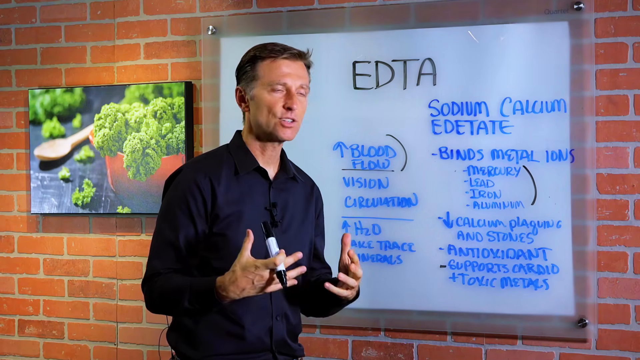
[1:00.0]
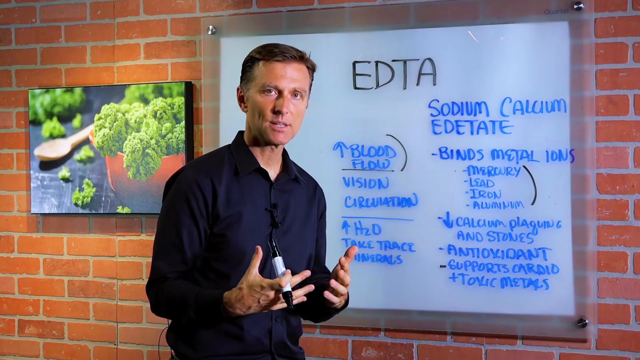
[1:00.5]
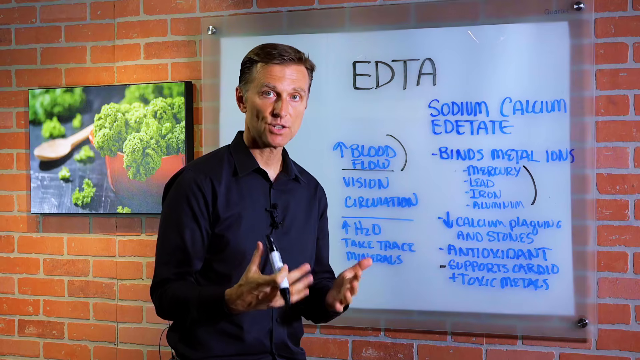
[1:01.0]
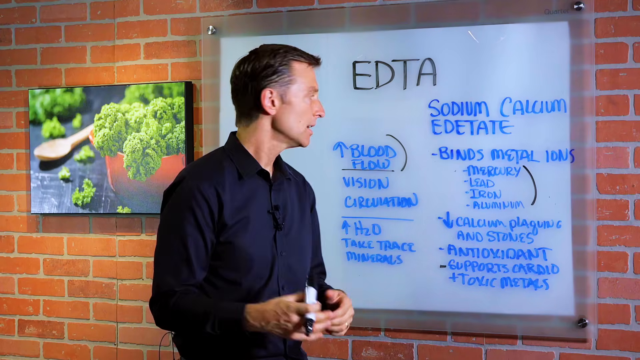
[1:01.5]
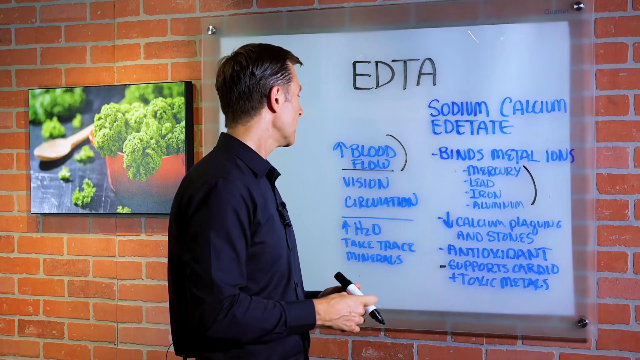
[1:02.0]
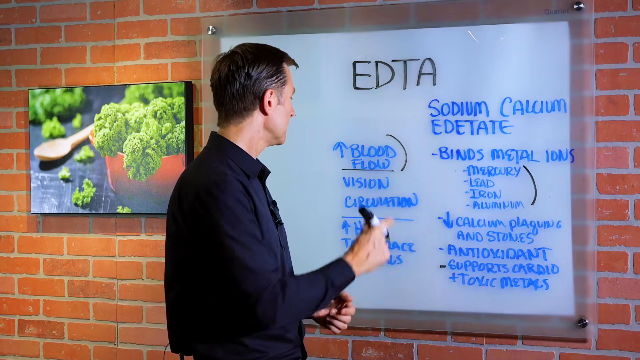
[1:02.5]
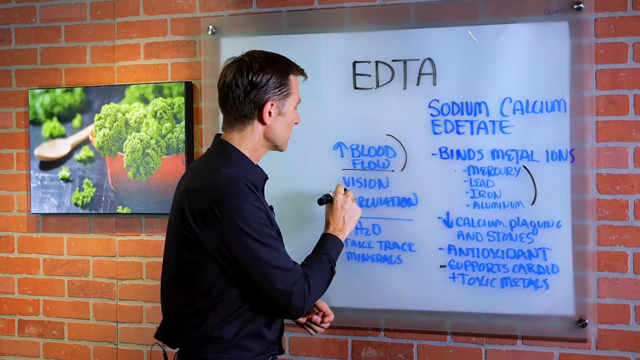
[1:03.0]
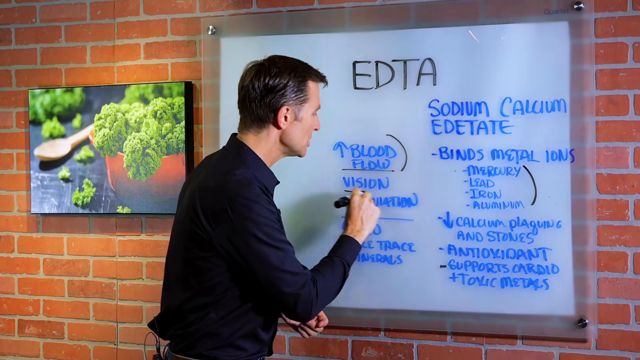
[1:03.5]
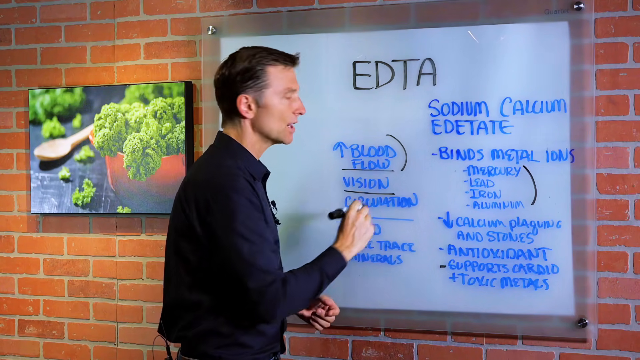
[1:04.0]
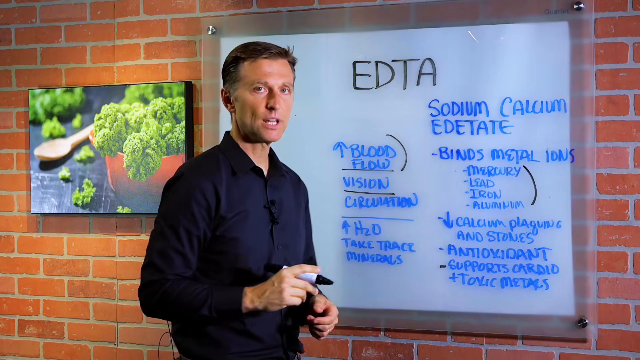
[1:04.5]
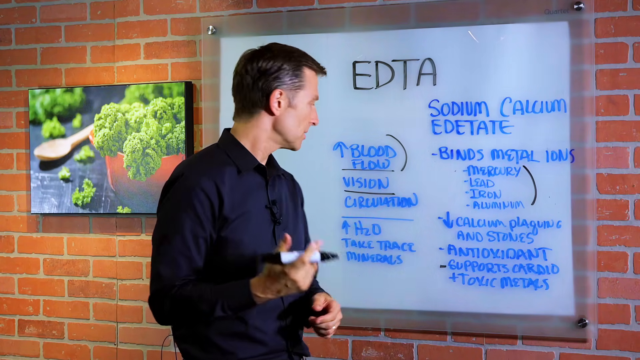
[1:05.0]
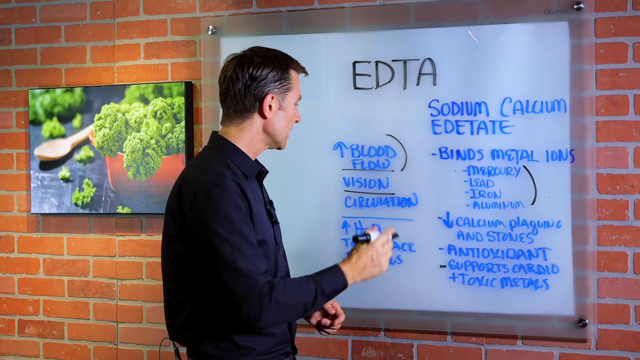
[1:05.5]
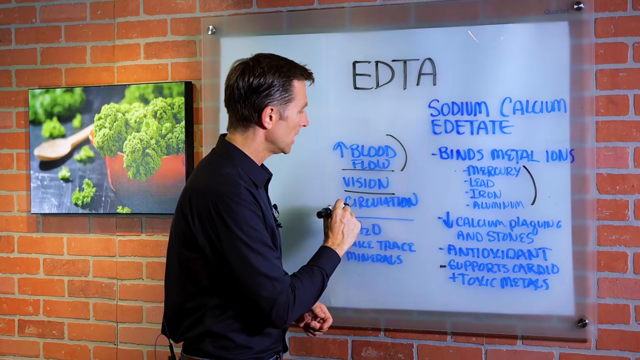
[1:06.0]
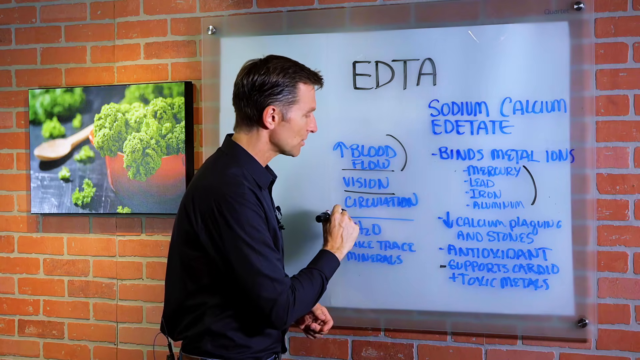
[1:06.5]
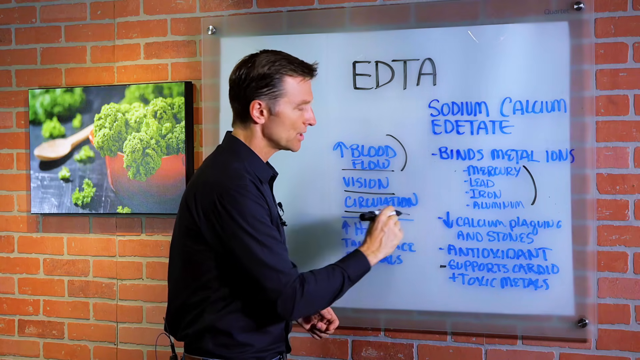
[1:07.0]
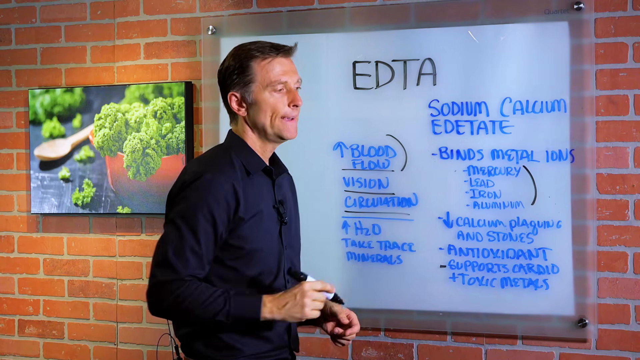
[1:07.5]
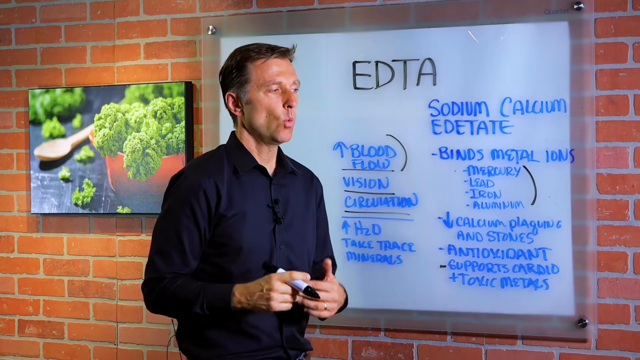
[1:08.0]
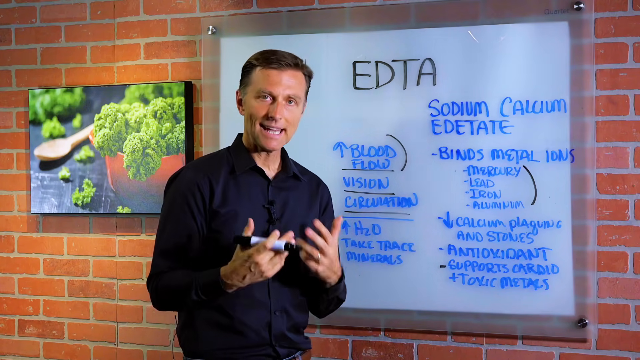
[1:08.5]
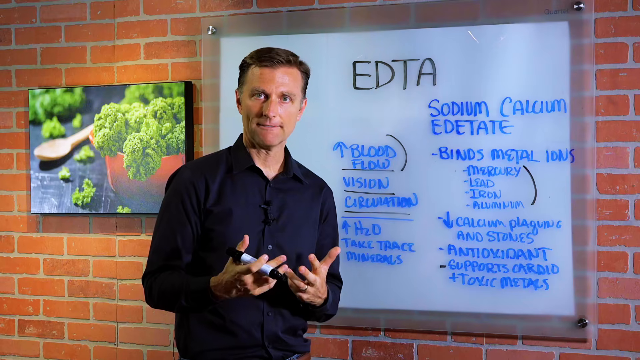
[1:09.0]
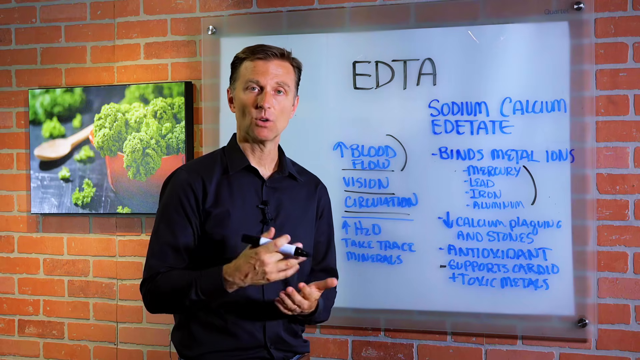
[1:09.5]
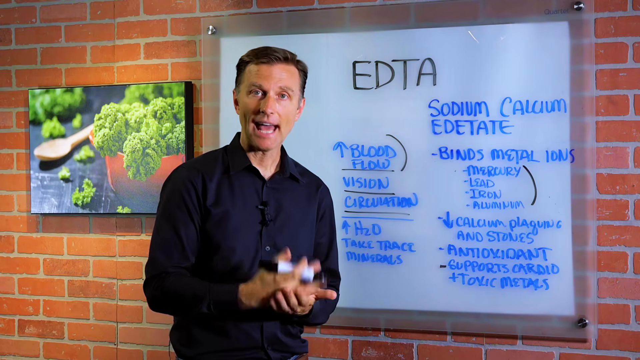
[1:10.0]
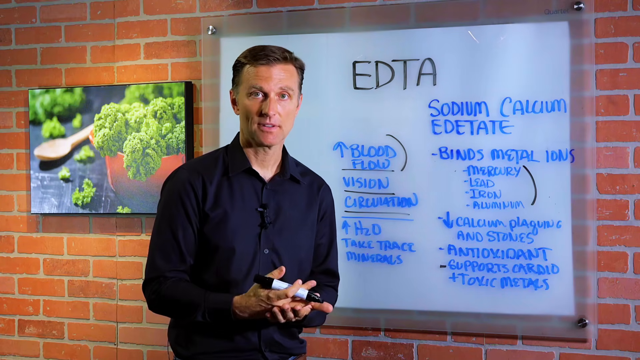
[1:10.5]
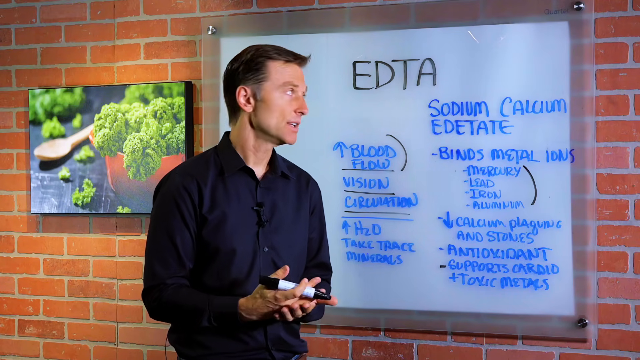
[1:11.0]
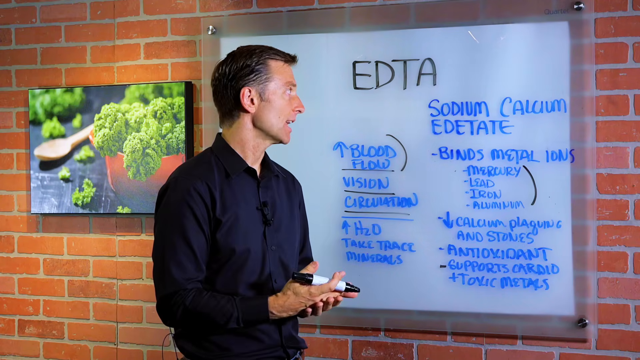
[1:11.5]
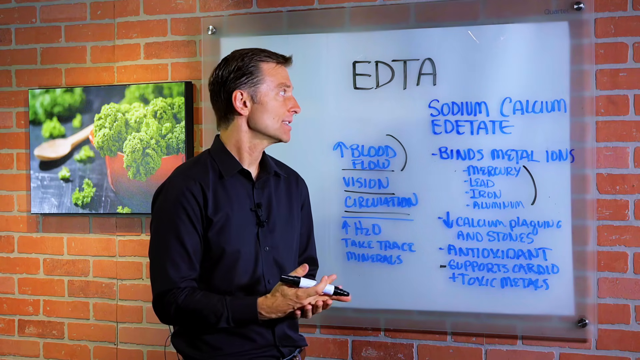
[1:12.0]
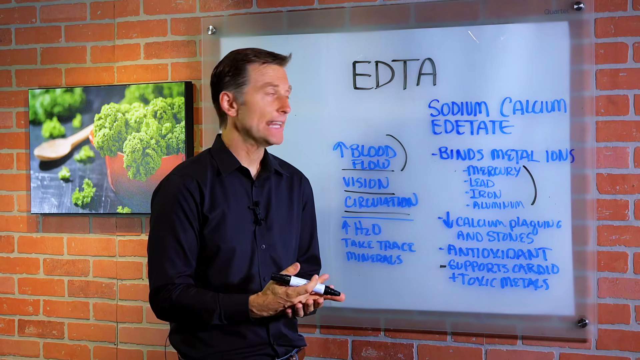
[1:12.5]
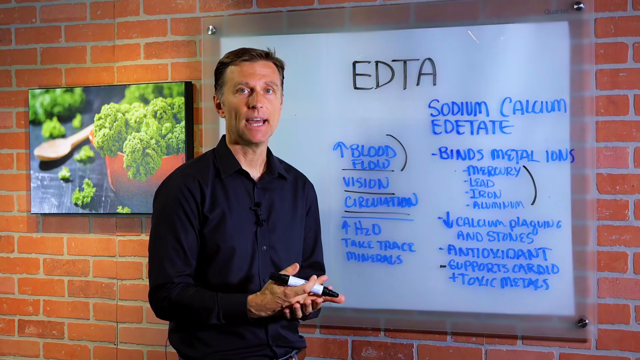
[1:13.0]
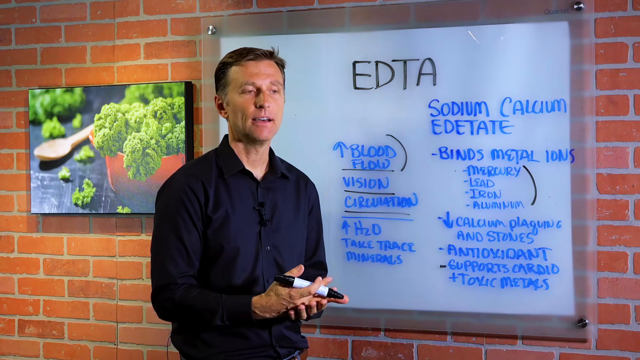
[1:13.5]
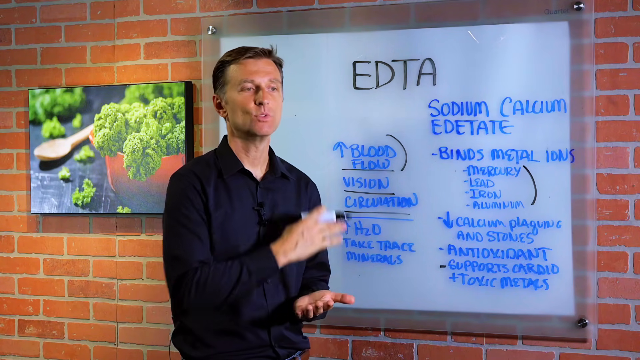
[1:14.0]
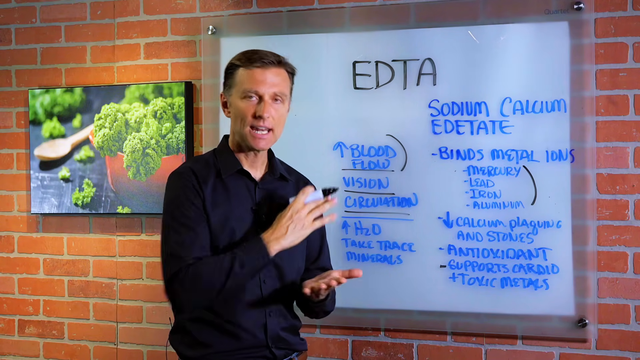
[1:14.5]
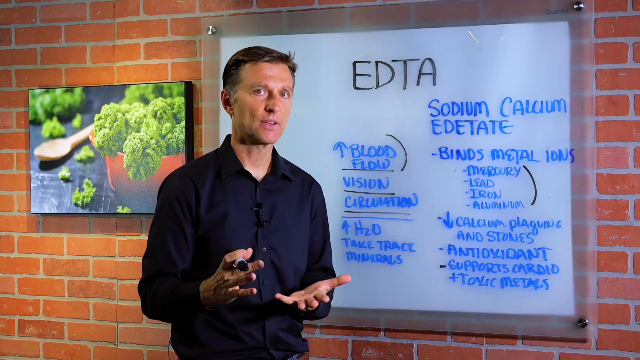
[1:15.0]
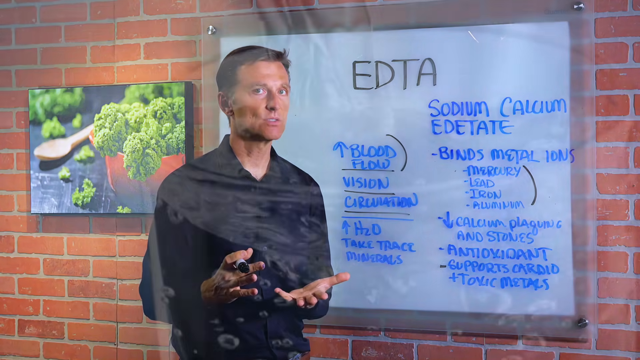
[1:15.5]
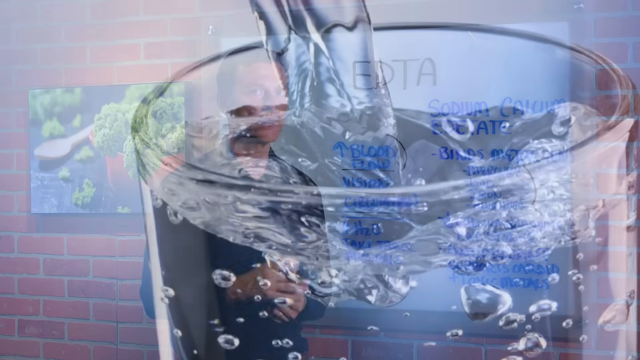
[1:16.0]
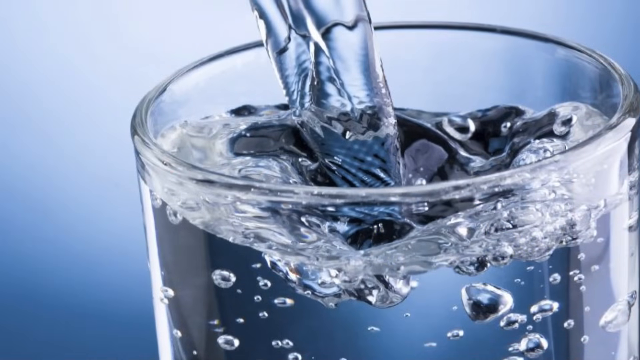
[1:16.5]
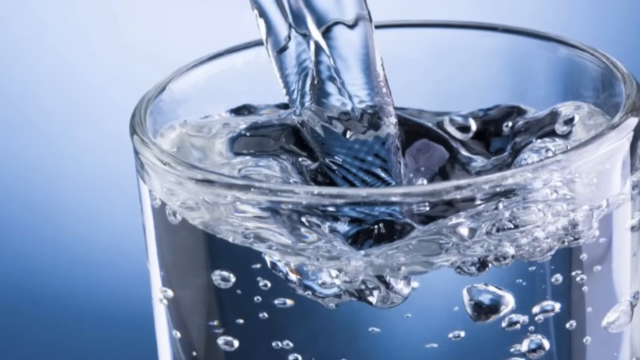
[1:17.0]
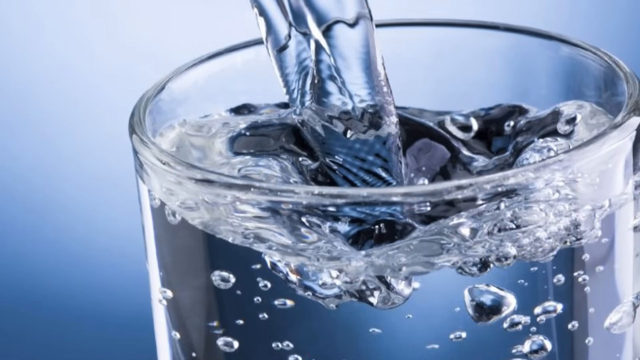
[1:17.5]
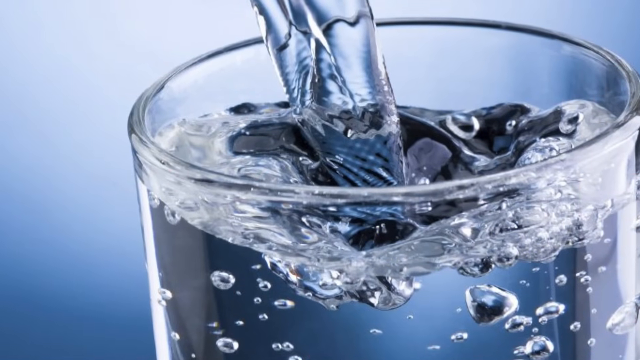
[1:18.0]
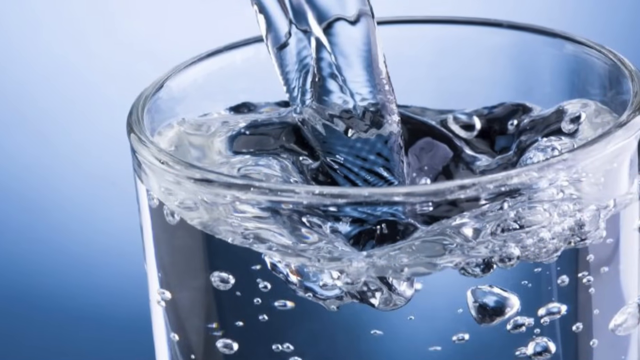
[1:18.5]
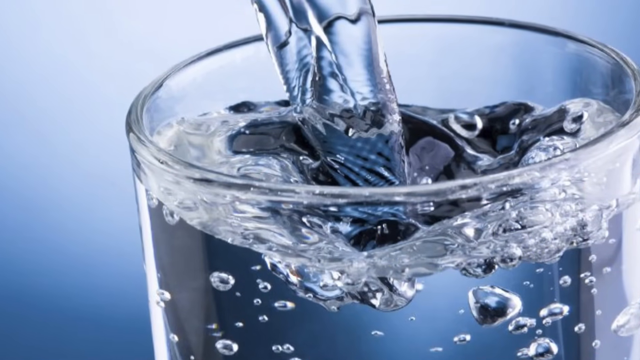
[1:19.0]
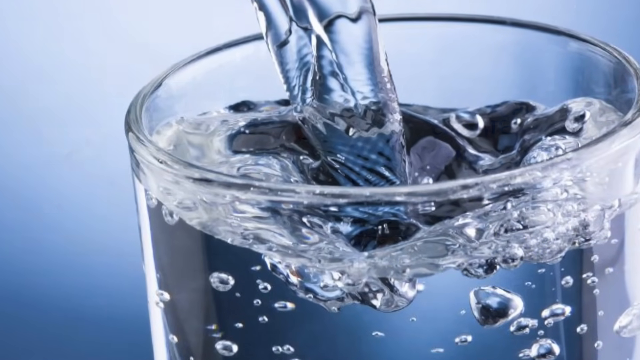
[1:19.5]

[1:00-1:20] A man with a blue shirt and brown hair holds a marker between the fingers of his right hand. He stands in front of a brick wall with a whiteboard behind him, and to his left is a picture of vegetables in a bowl and a wooden spoon on a black table. He moves his hands expressively, then looks toward the whiteboard and underlines the word "vision" with his black marker. He looks back toward the camera, then back at the whiteboard, and underlines the word "circulation" with the black marker. He makes expressive hand motions again, smacks his right hand into his left palm, and, looking at the whiteboard, makes a swiping motion with his right hand. The scene transitions to a cup of clear water, with water being poured in from the top, off-screen. Bubbles are visible in the water, and the background is blue and white.